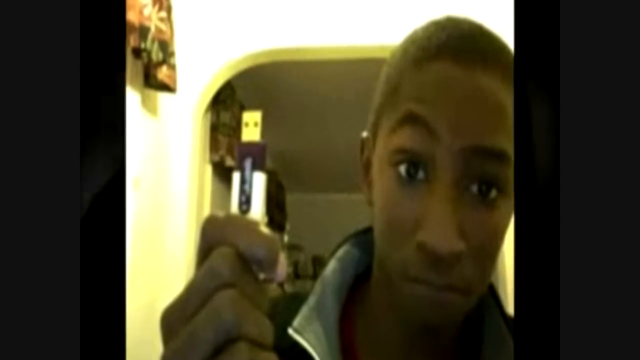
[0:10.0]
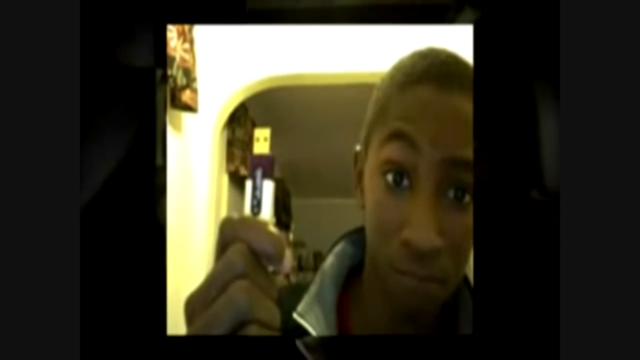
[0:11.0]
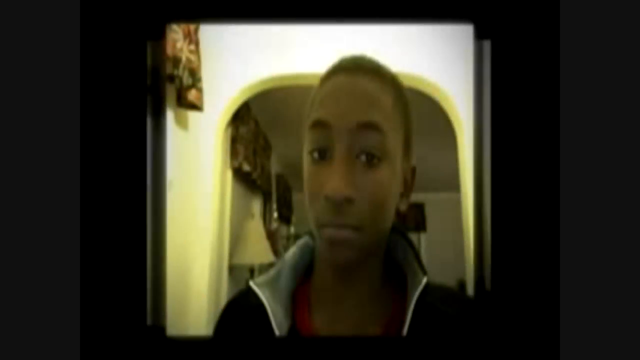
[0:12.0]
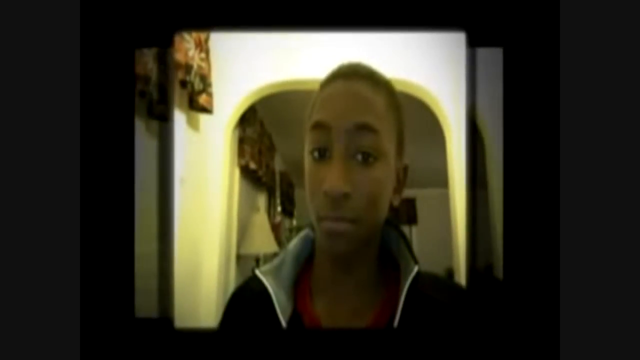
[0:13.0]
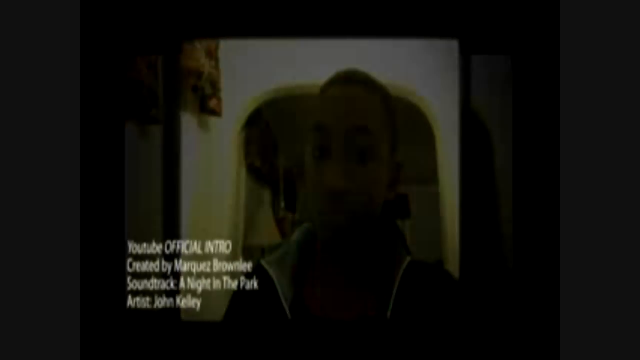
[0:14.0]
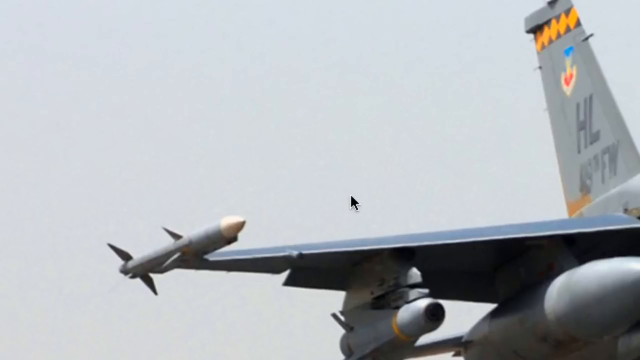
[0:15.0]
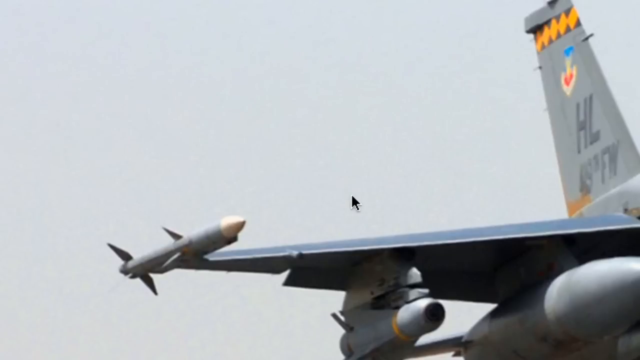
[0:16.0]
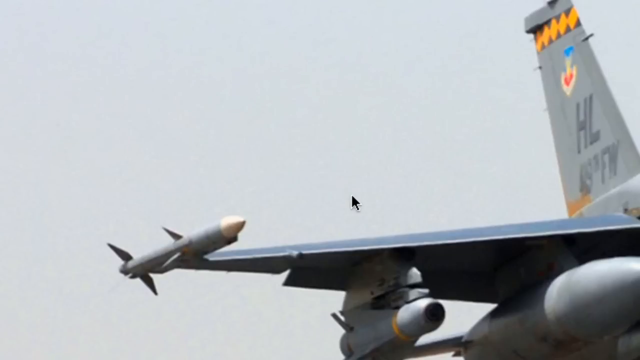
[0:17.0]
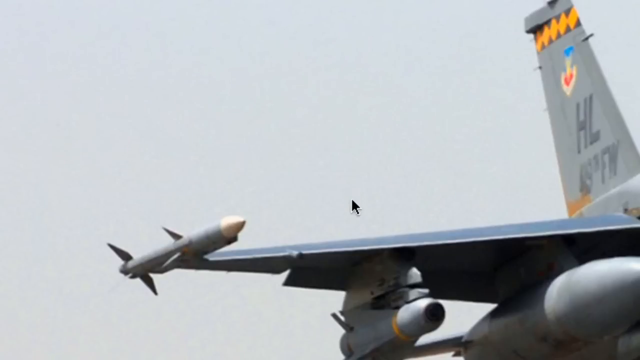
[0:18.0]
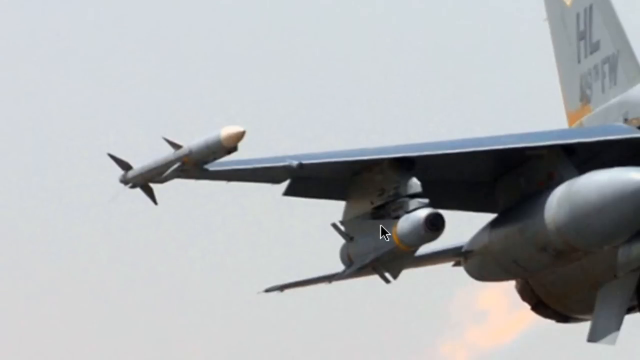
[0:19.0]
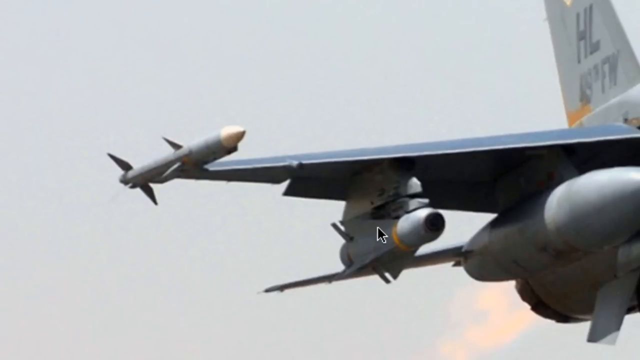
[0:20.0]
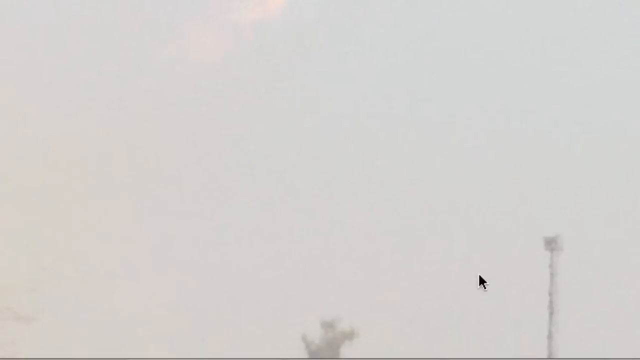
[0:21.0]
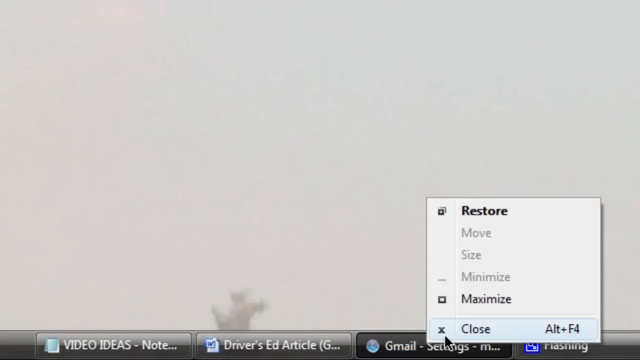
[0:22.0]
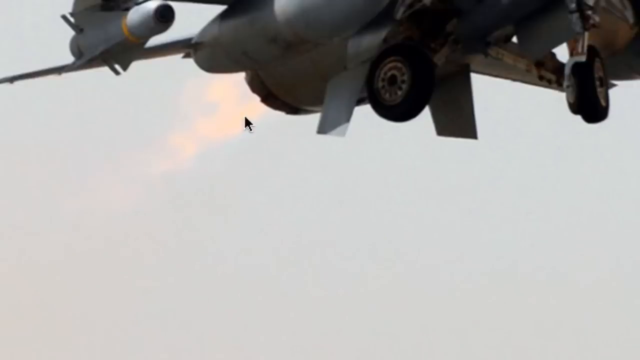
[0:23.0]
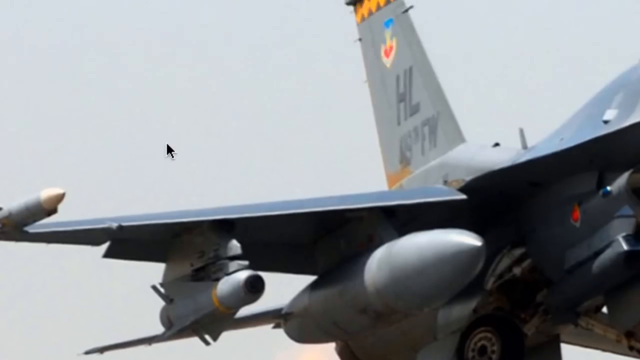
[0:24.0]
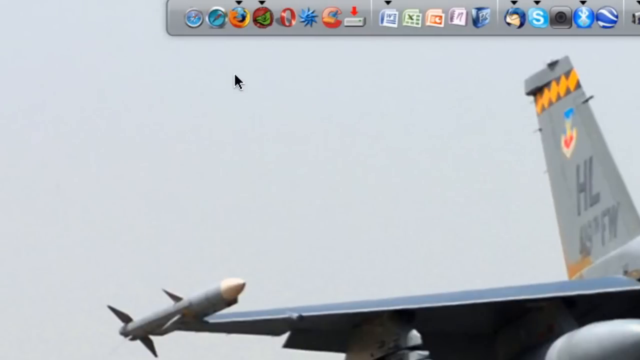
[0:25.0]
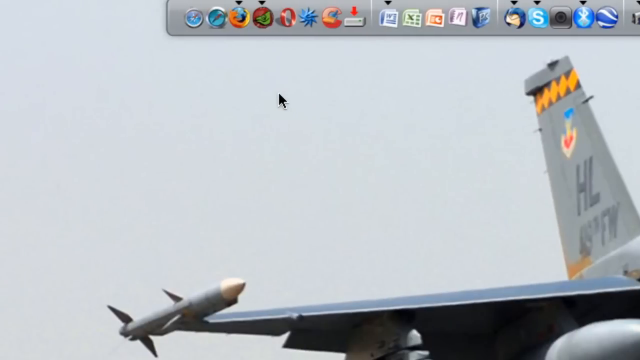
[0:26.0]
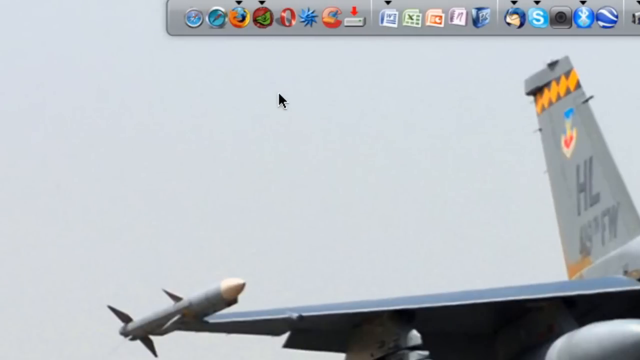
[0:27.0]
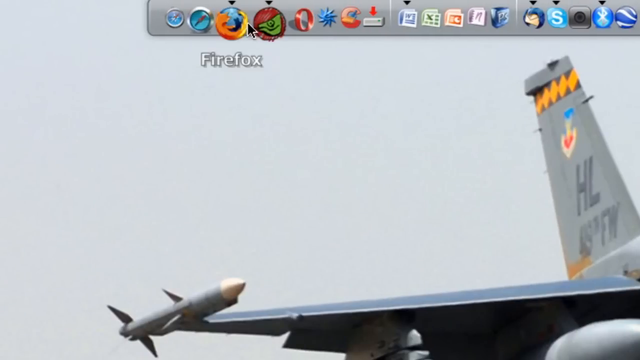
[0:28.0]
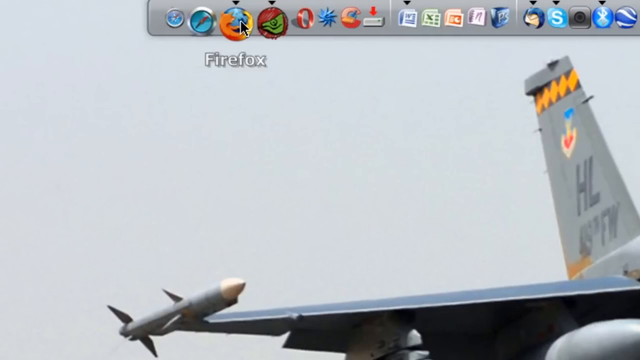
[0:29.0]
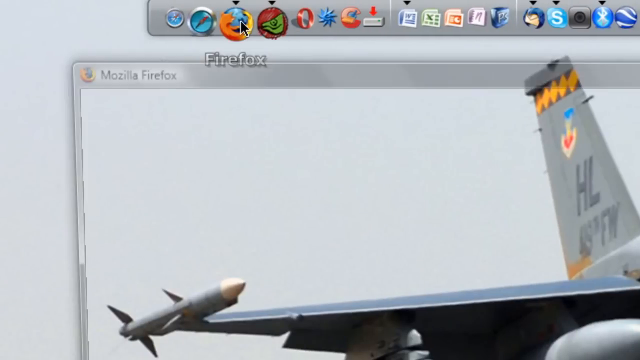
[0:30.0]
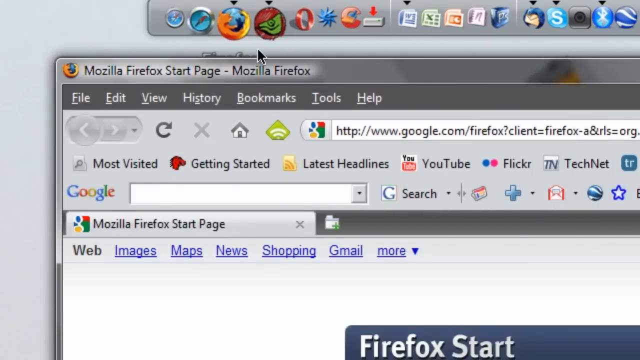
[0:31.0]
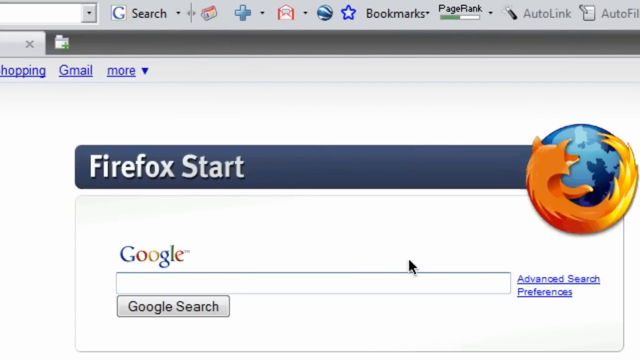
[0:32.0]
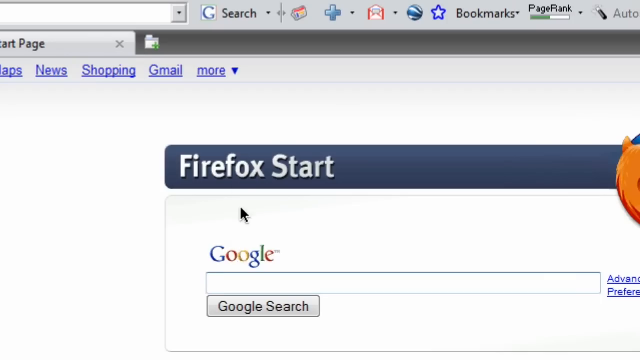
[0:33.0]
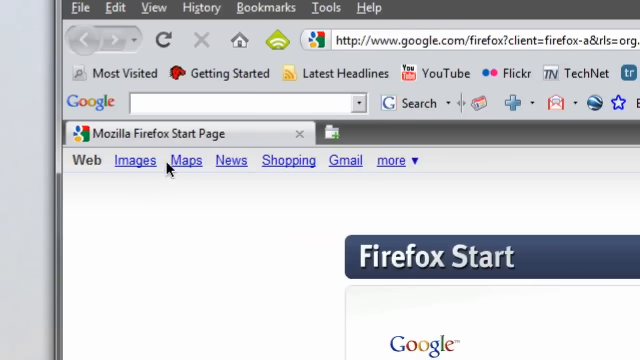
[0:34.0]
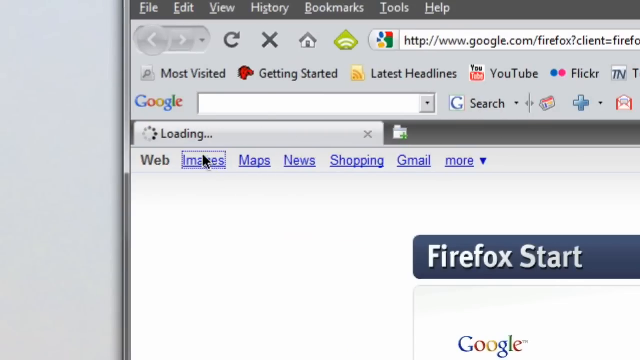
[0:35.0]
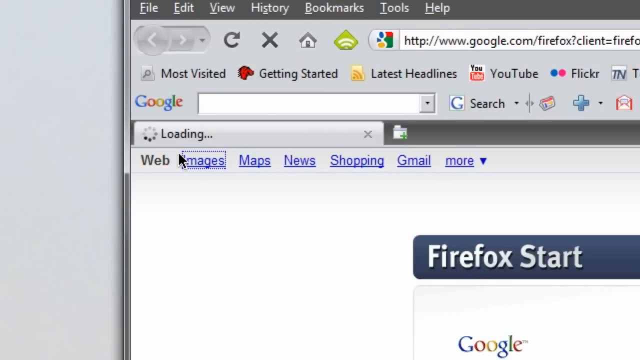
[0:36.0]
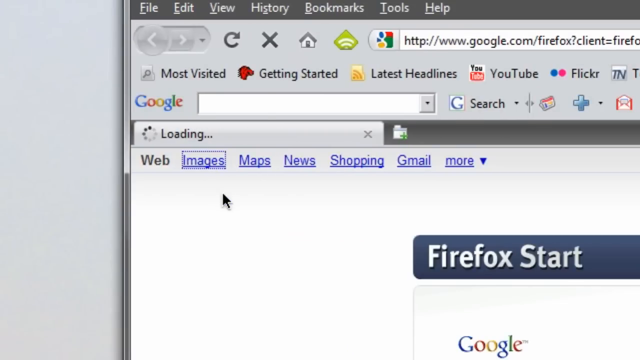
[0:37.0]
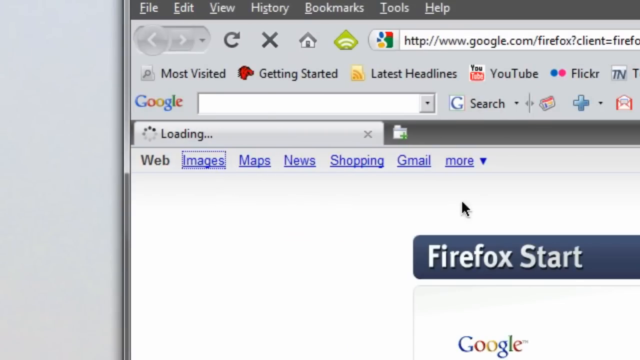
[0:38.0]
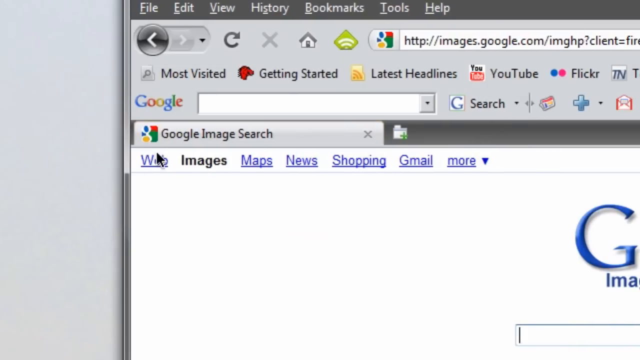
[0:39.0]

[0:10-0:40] Two images of the boy appear, both looking at the camera. They disappear, and a very quick, very blurry sort of credit screen flashes up. Next comes an image of an aeroplane, which appears to be on a computer screen, as a cursor moves around and seems to control where the view goes. The cursor goes to a taskbar at the top and selects Firefox and then images. The image page takes a while to load, and the cursor then clicks on web again. Along the taskbar are various other icons, including Internet Explorer, Opera, Microsoft Word, Excel, PowerPoint, Skype, Bluetooth and various unidentified others. The cursor is a standard black arrow, and the website that comes up automatically is Google.